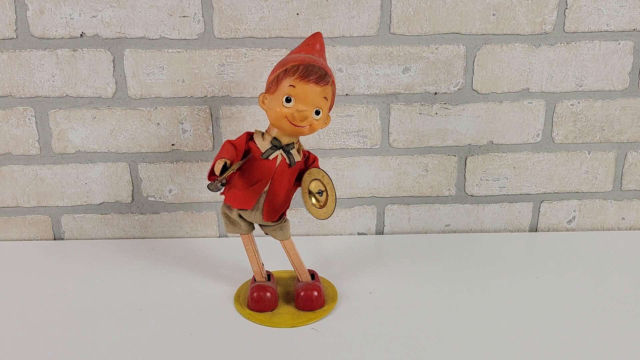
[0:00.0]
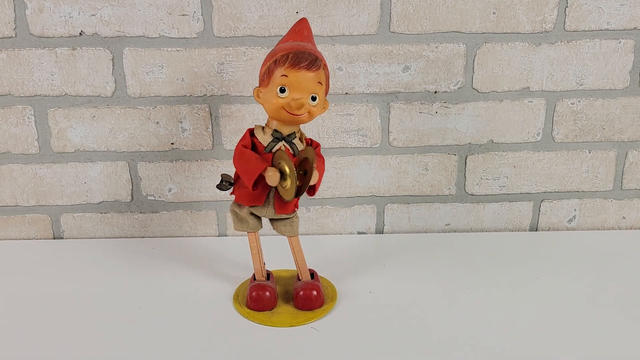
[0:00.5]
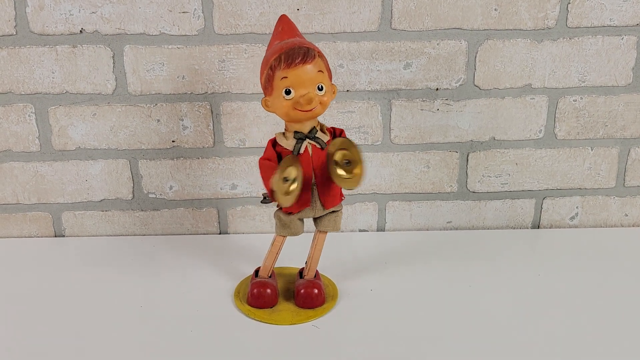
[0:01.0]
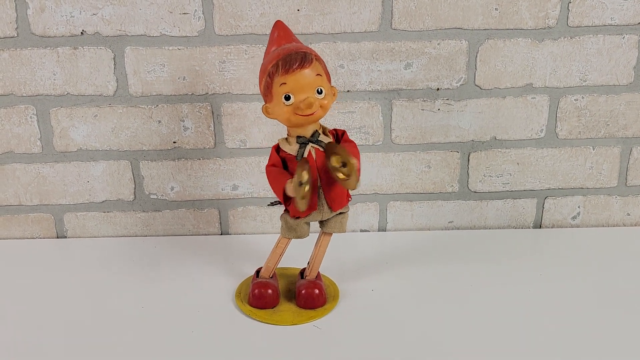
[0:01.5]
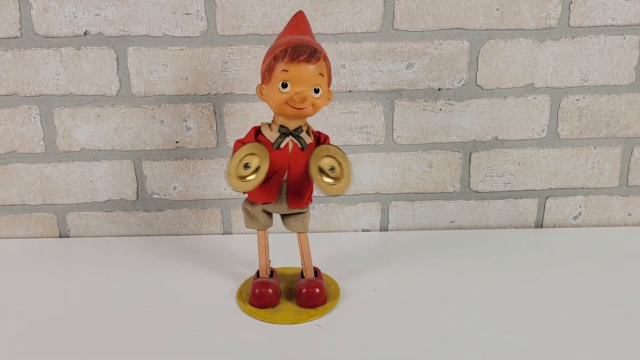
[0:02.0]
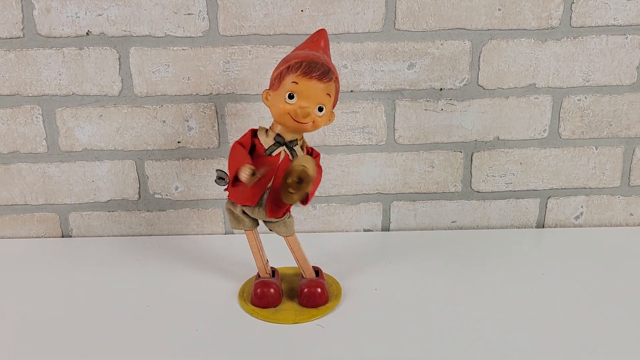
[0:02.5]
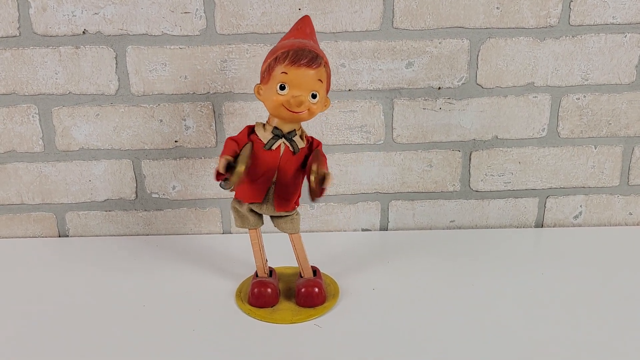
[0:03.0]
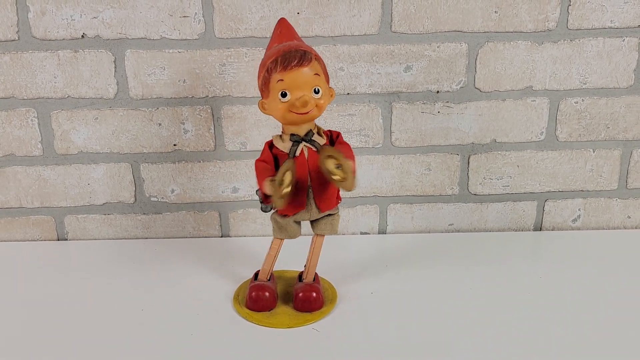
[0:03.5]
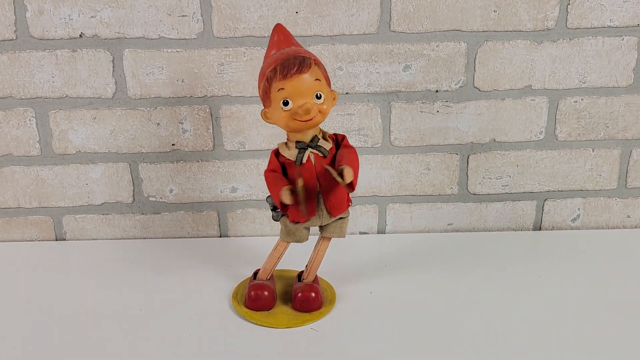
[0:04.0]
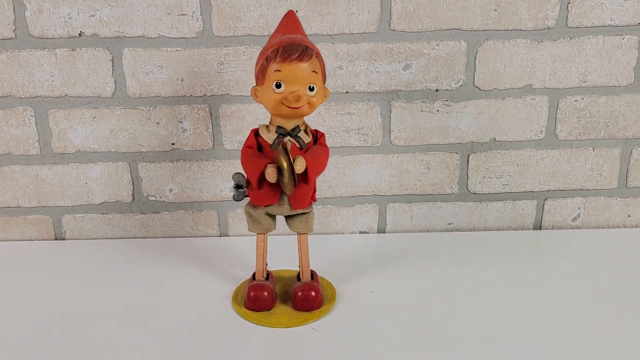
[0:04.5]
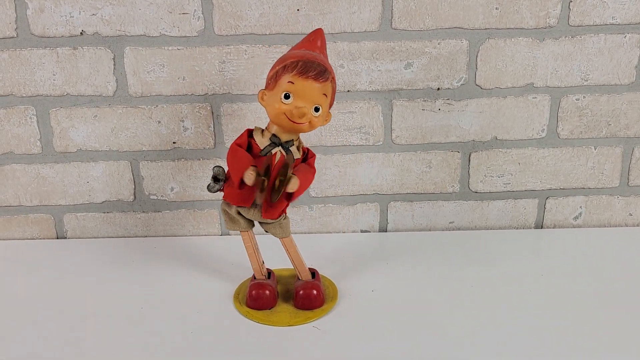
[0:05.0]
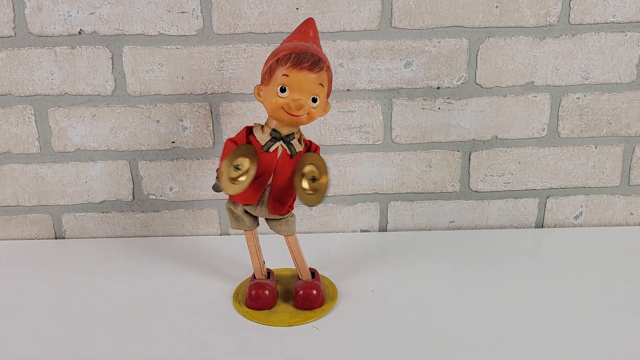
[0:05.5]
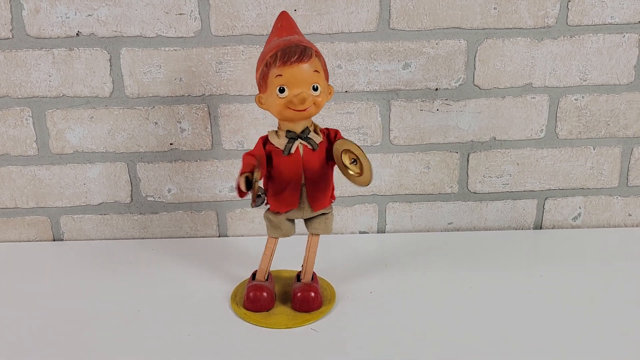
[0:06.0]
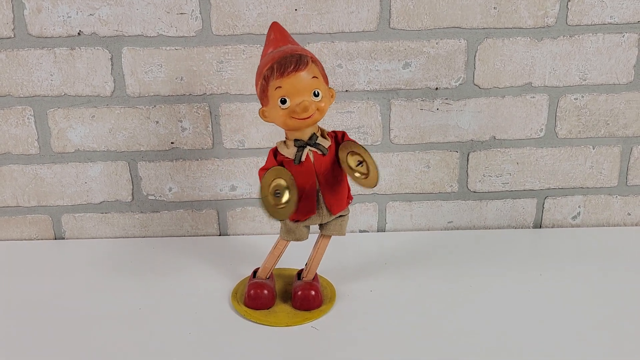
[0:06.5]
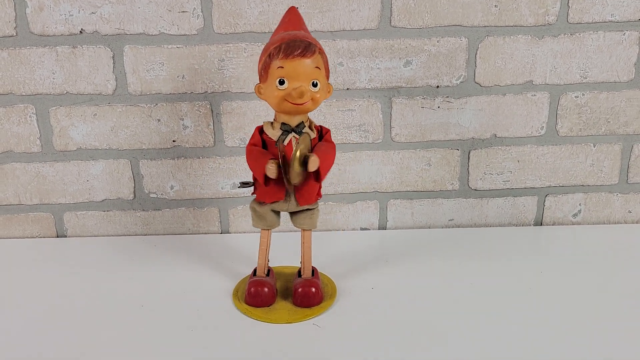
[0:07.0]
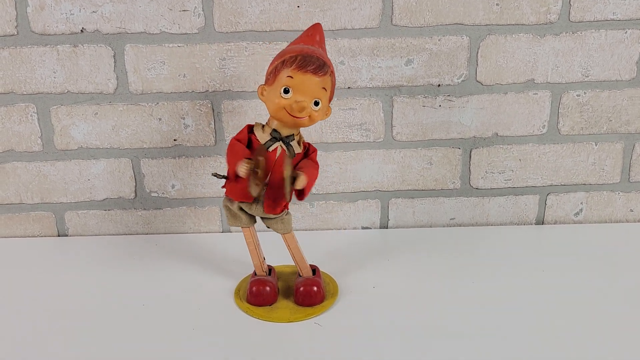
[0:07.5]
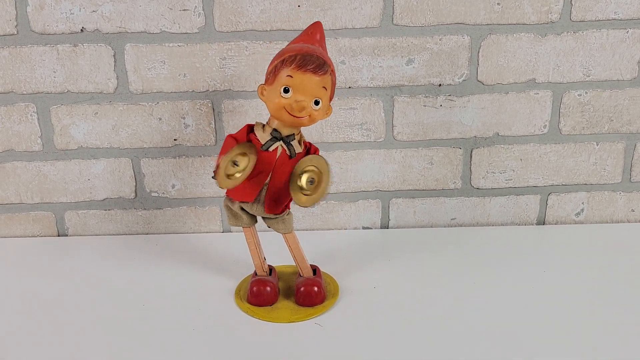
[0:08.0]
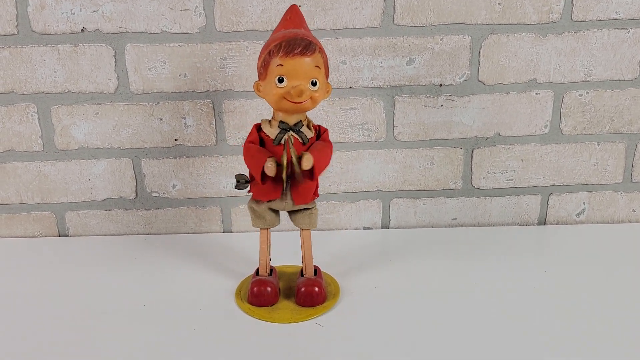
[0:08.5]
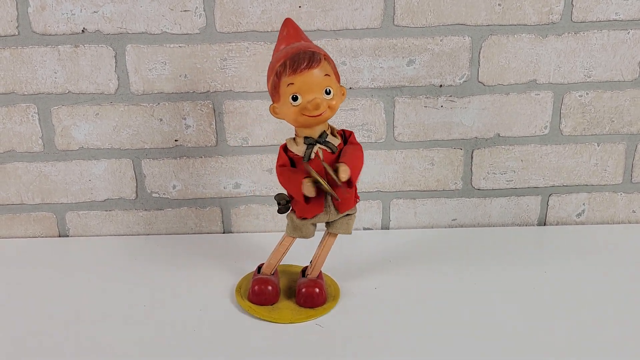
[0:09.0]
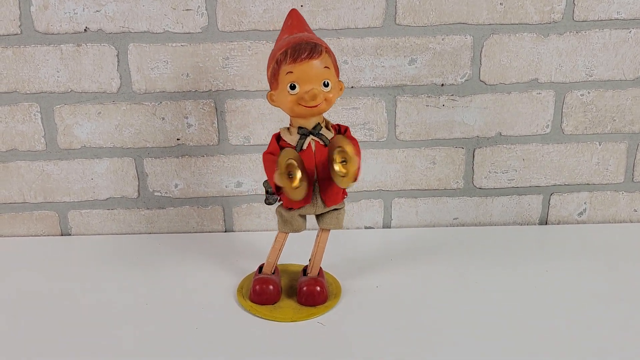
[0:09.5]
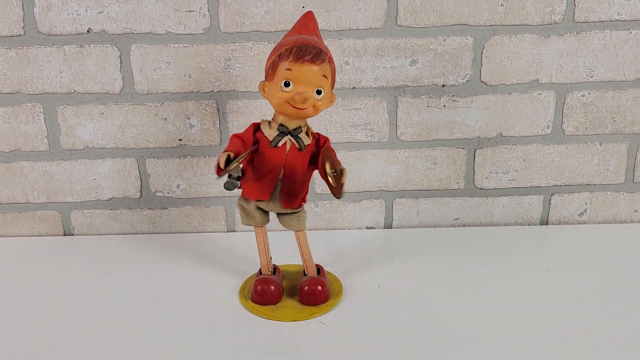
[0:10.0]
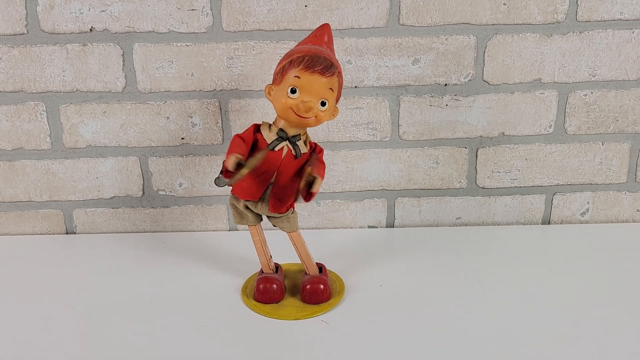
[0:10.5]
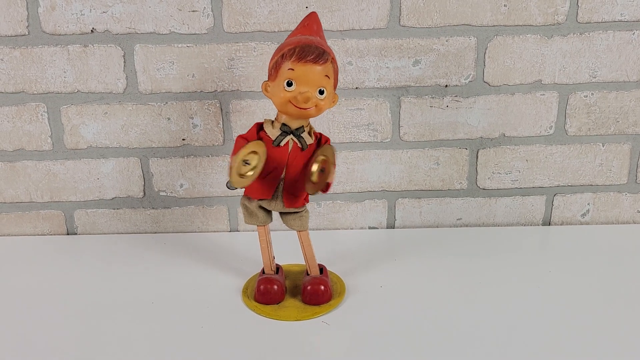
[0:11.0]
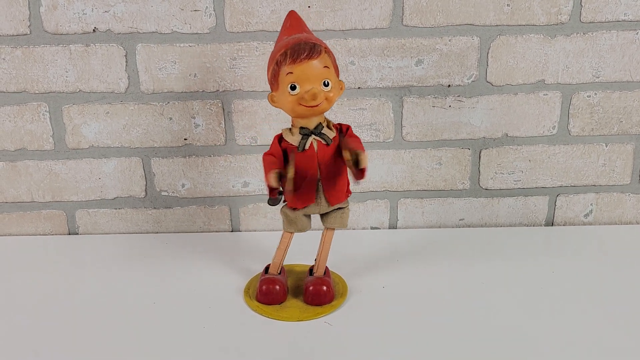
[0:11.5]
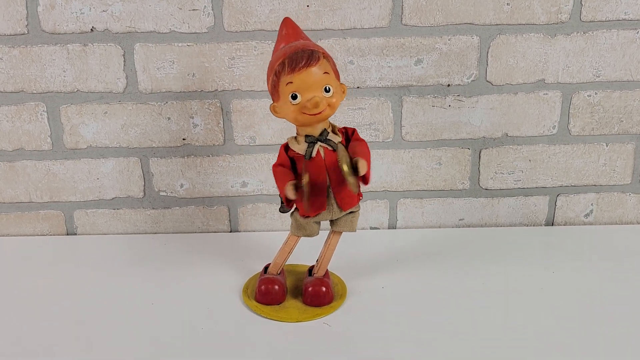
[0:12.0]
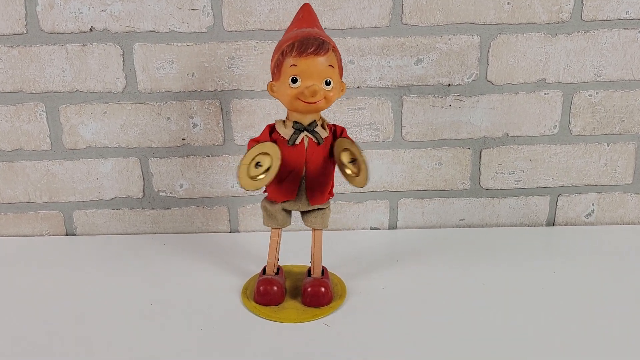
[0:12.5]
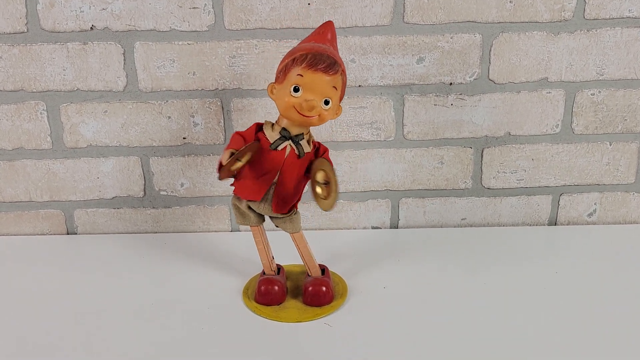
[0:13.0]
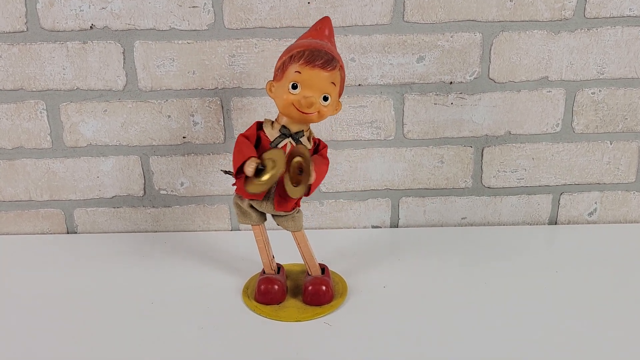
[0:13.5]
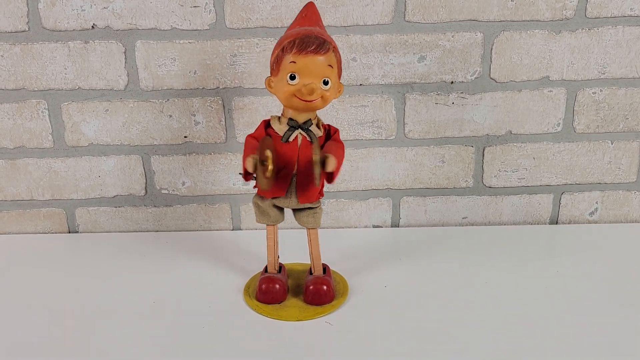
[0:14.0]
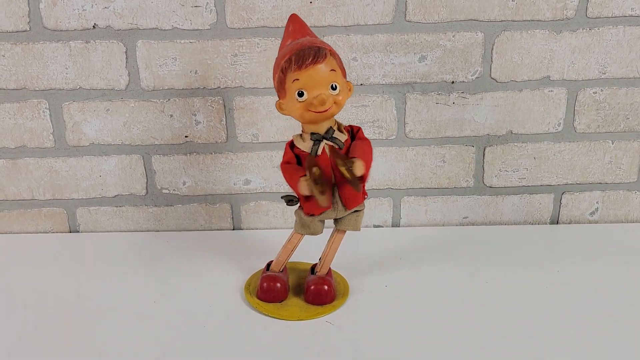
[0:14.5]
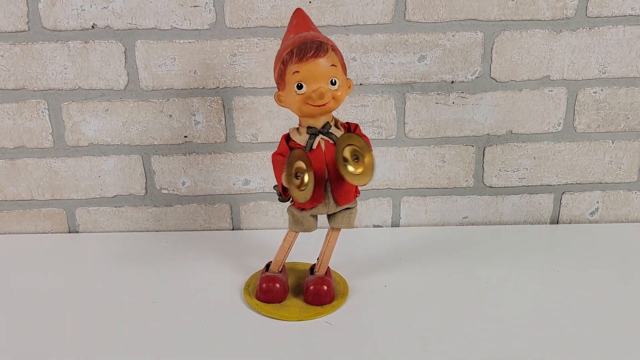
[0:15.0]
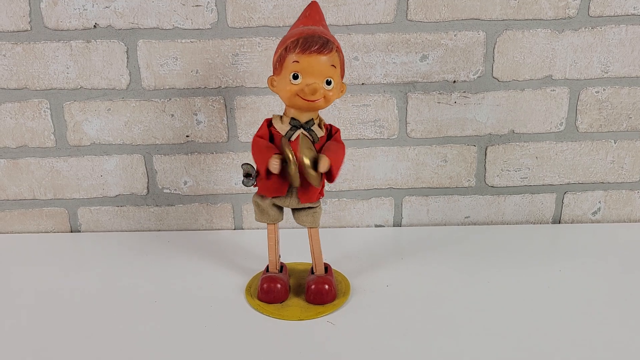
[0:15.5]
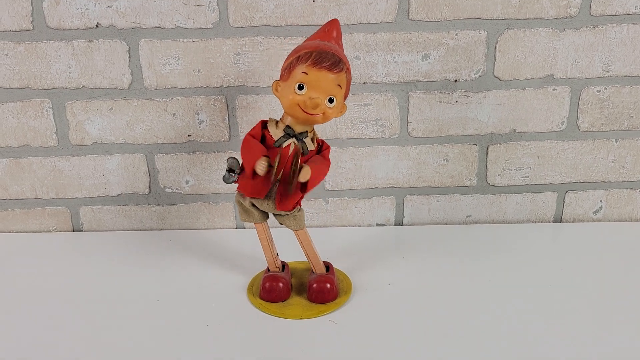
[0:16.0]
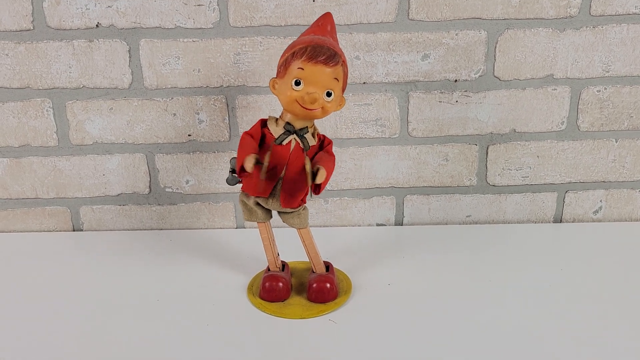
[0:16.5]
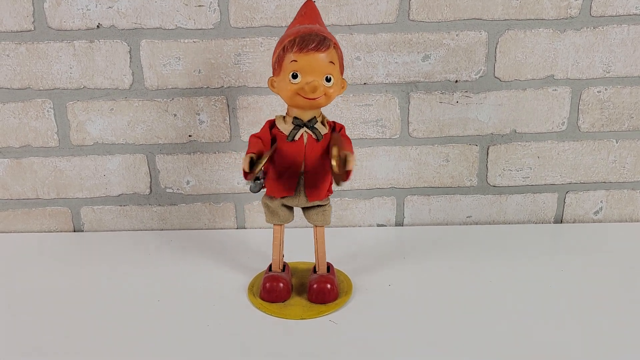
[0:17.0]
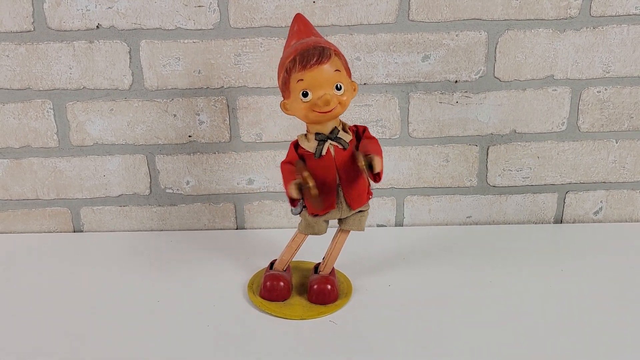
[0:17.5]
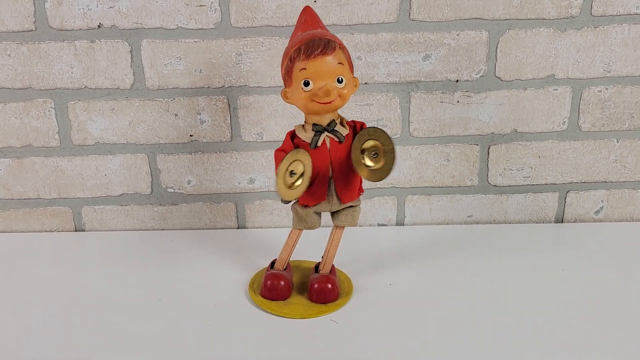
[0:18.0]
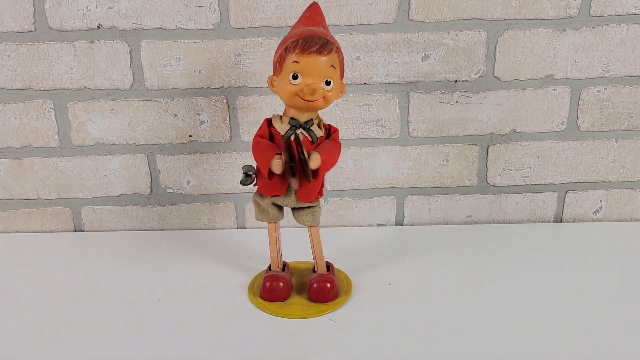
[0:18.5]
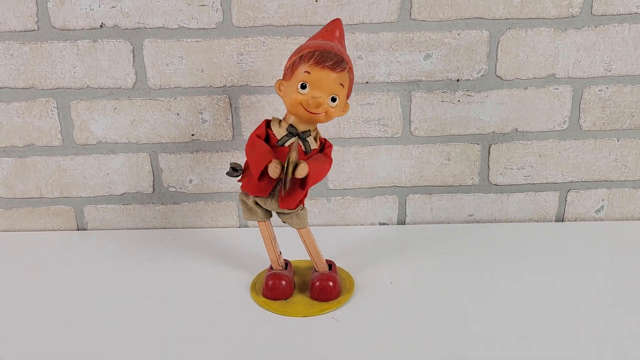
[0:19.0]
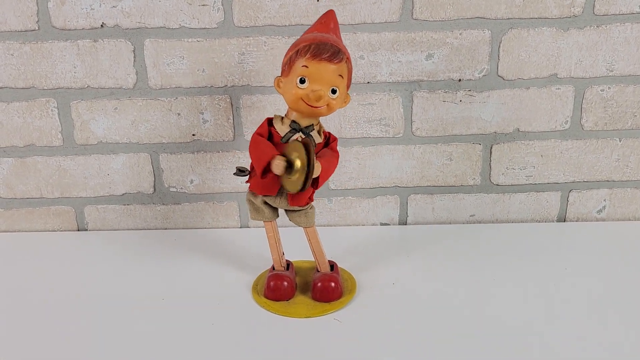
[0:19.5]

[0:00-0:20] The video shows a toy that looks like it could possibly be an antique. The toy is standing up and appears to be a wind-up toy, which keeps it moving. It looks like some type of little boy with very big red shoes that are way too big for the child. The figure has a very long nose, kind of resembling Pinocchio, and is hitting together metal cymbals. He wears gray short shorts and a funny-looking red pointy hat. The figure wiggles back and forth to the left and right, moving its hips a lot. His eyebrows are raised like he's having fun, and his eyes are wide open; the eye color looks dark brown. His hair is dark brown, and his eyebrows are also brown.